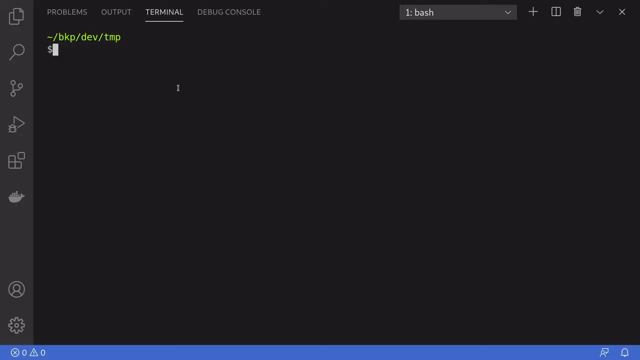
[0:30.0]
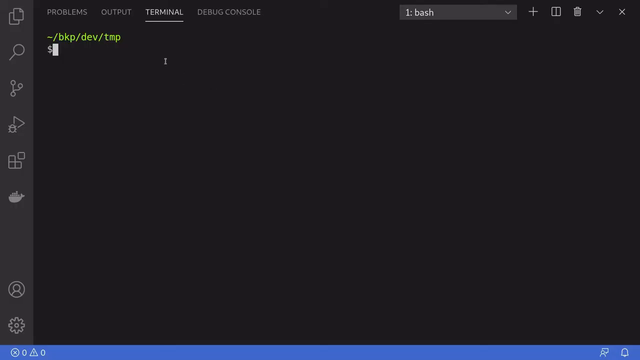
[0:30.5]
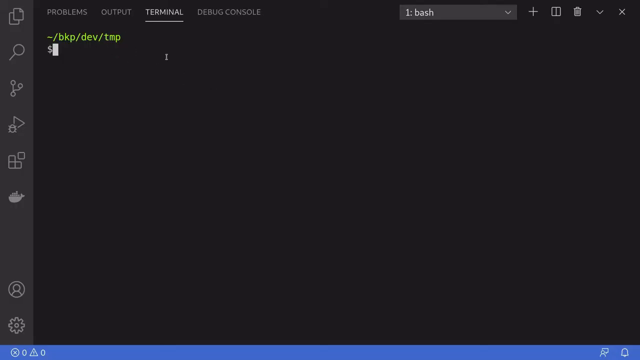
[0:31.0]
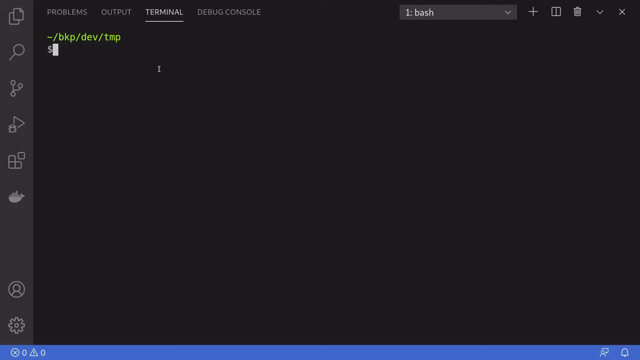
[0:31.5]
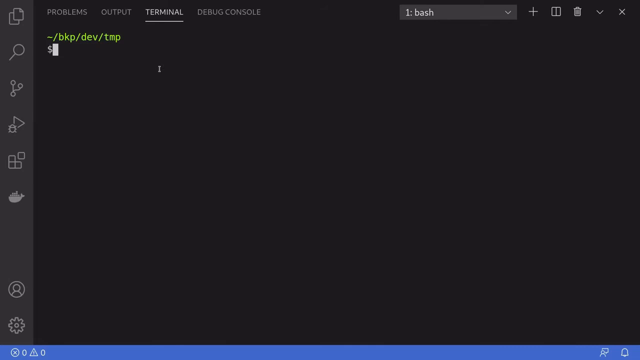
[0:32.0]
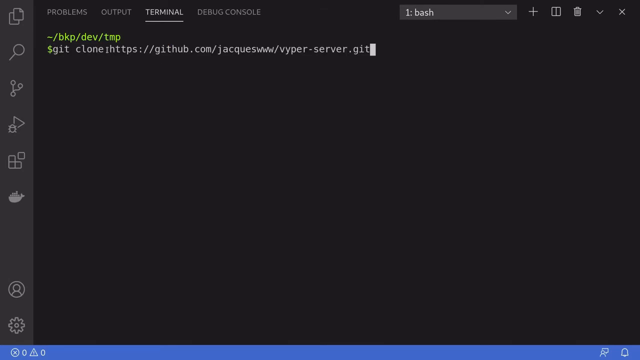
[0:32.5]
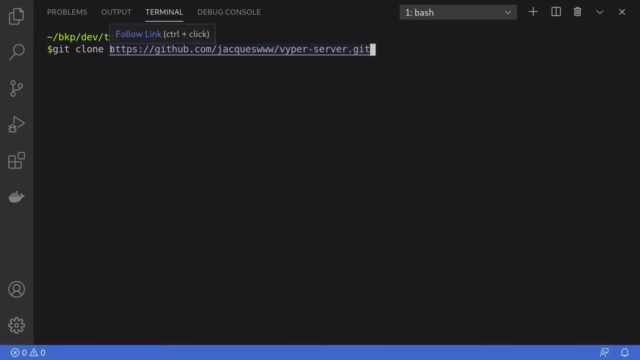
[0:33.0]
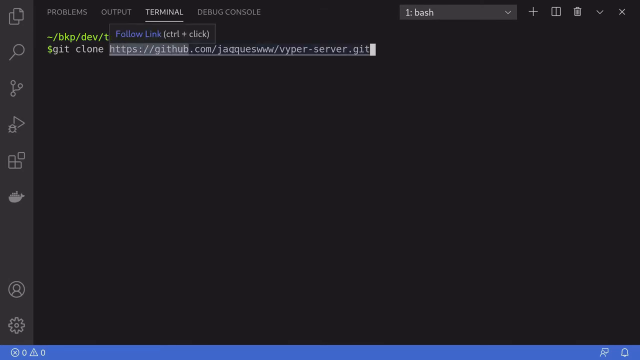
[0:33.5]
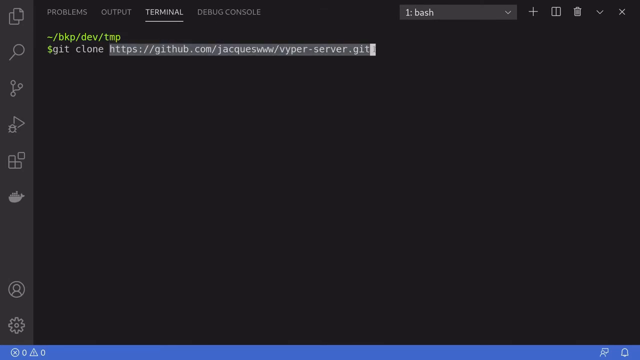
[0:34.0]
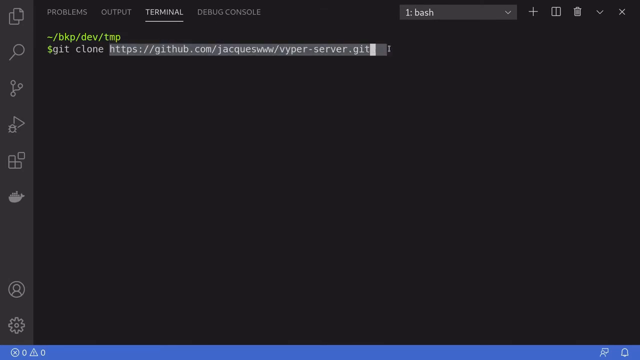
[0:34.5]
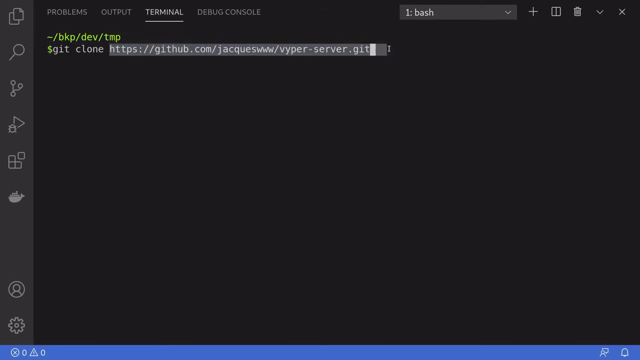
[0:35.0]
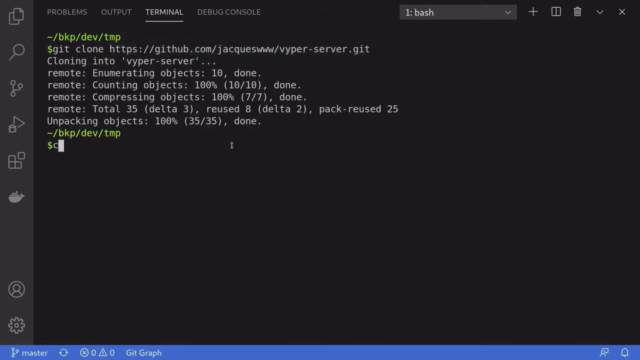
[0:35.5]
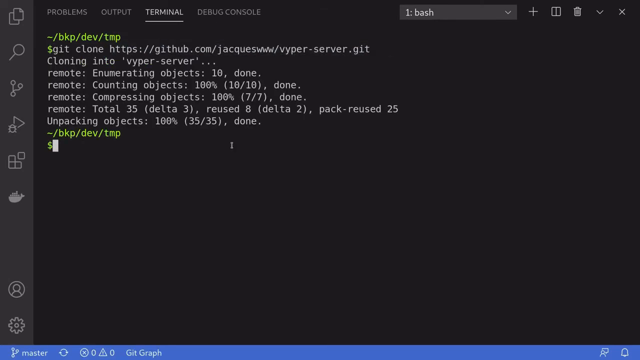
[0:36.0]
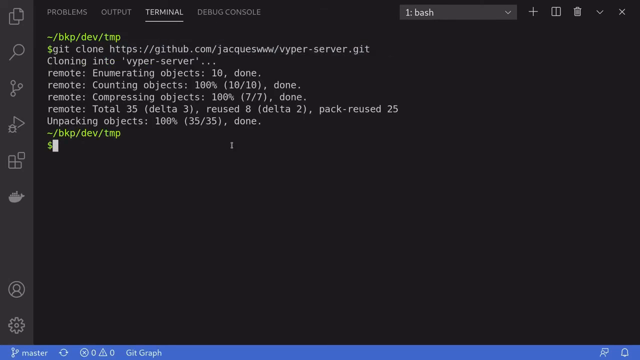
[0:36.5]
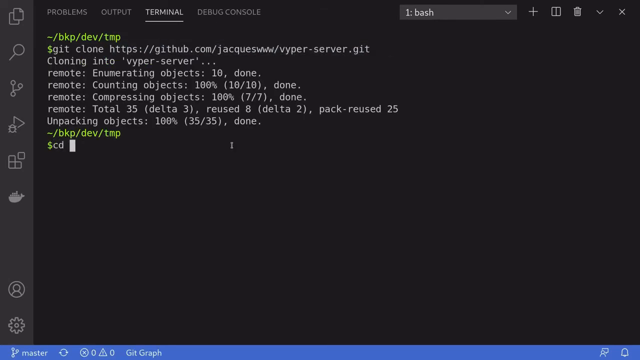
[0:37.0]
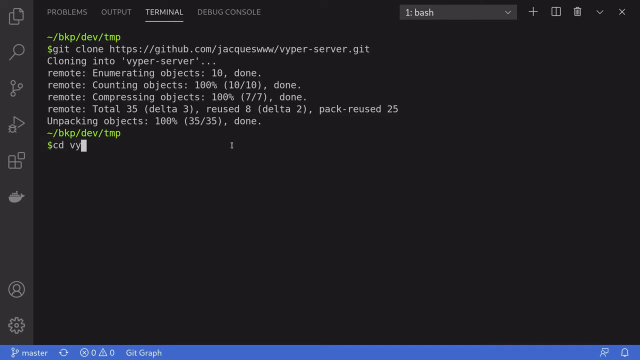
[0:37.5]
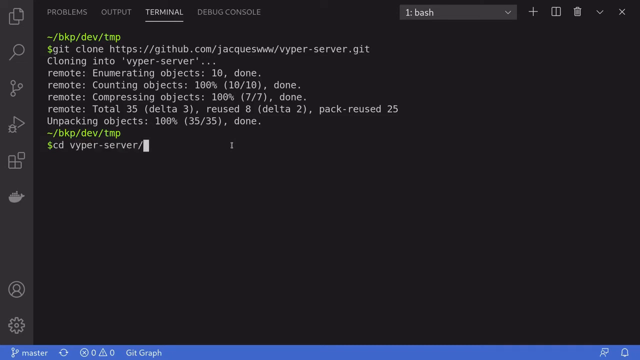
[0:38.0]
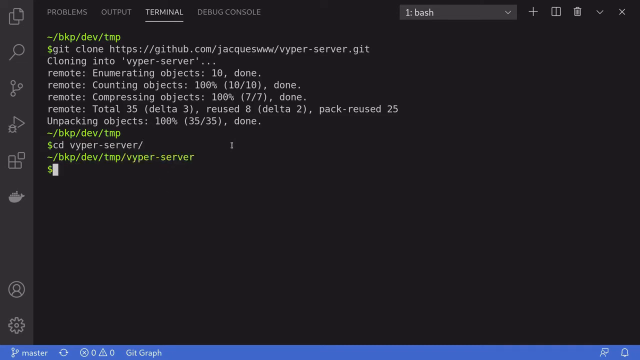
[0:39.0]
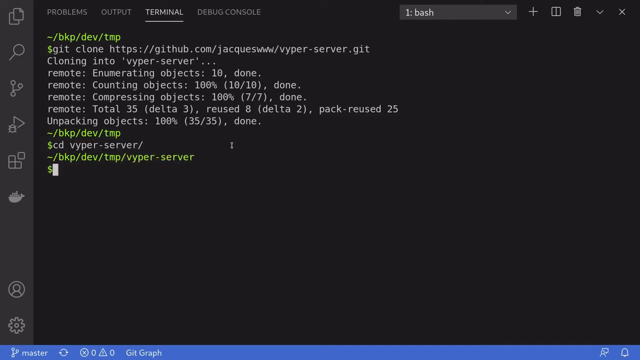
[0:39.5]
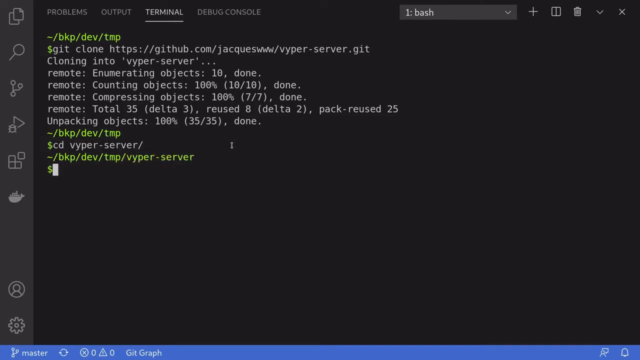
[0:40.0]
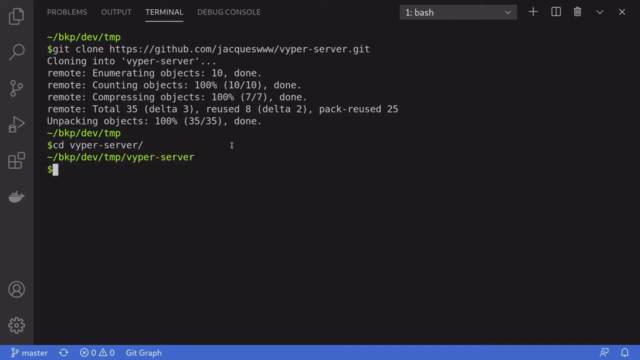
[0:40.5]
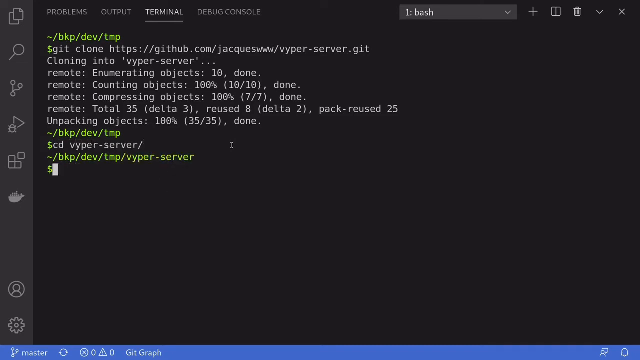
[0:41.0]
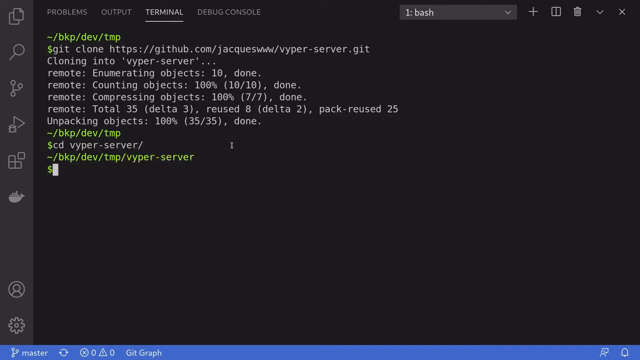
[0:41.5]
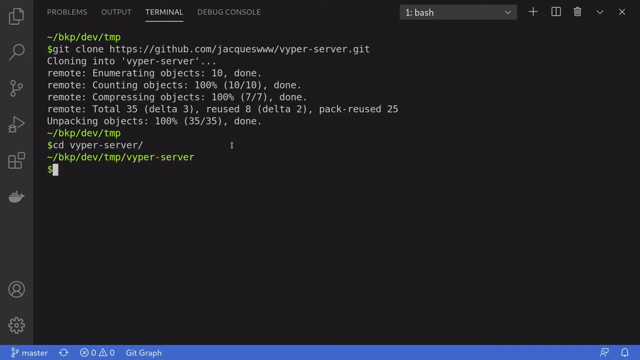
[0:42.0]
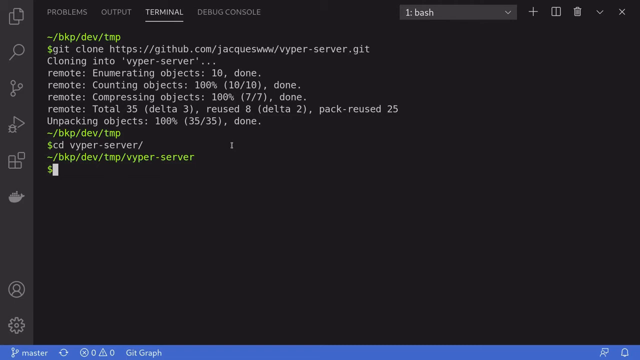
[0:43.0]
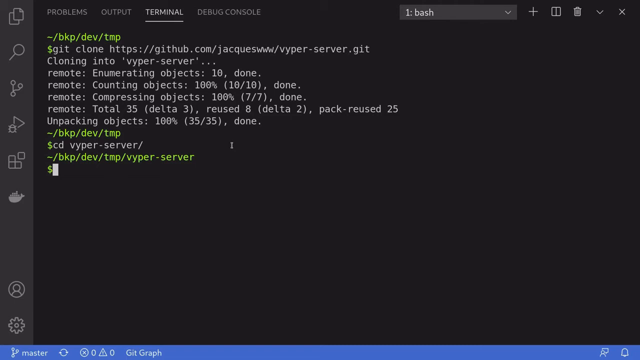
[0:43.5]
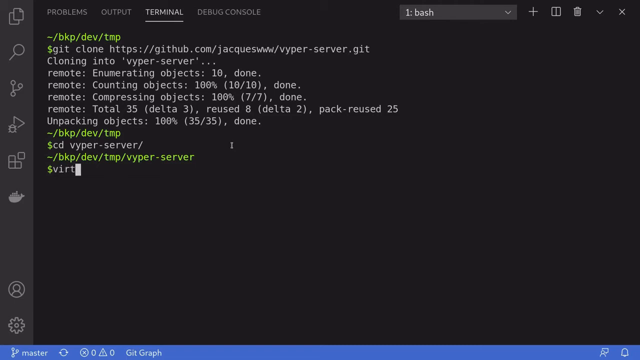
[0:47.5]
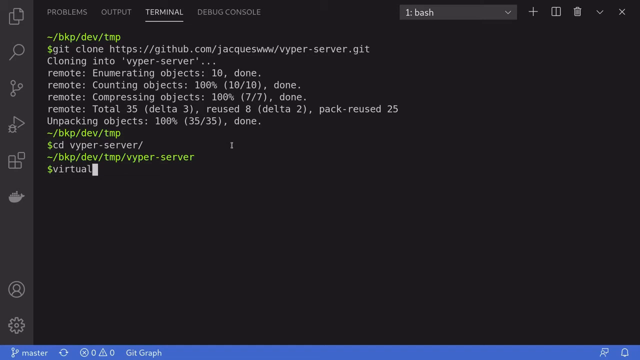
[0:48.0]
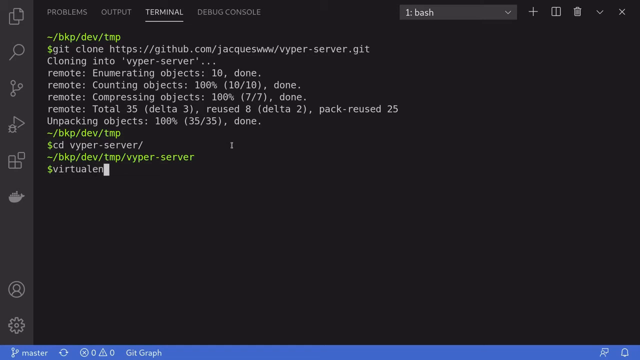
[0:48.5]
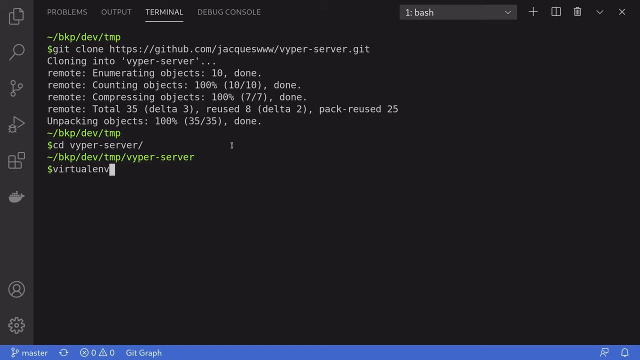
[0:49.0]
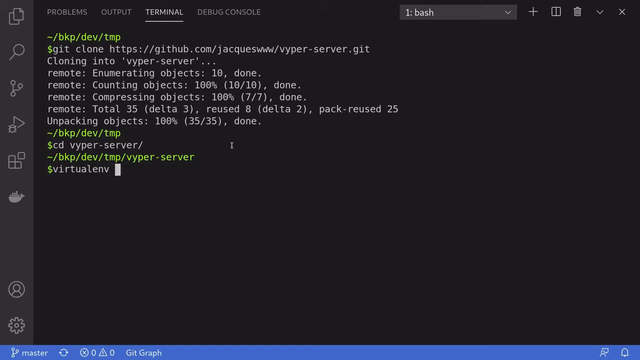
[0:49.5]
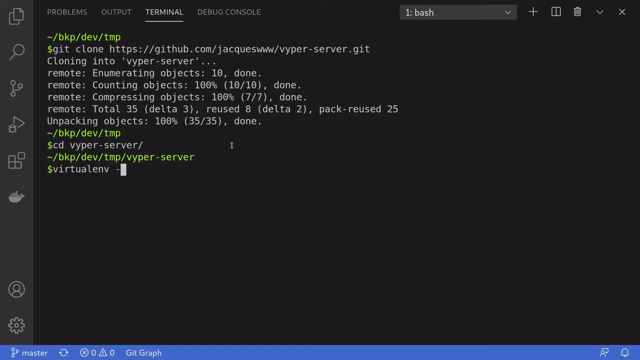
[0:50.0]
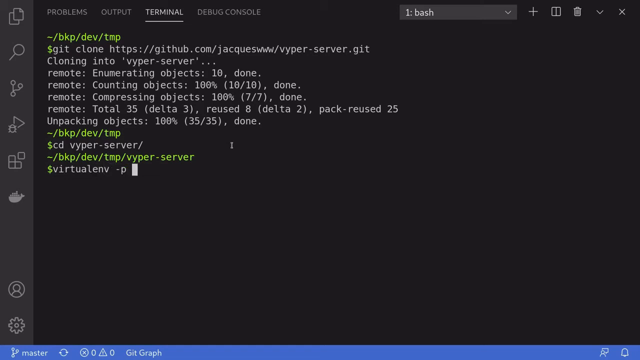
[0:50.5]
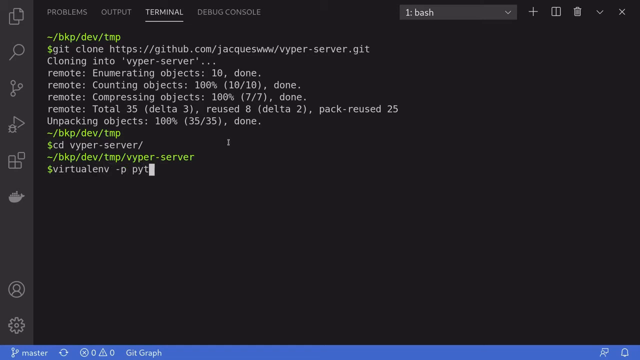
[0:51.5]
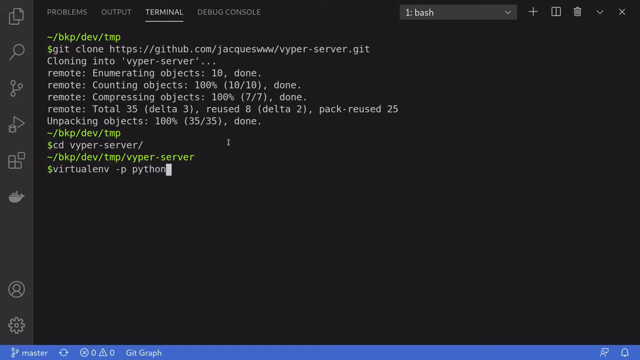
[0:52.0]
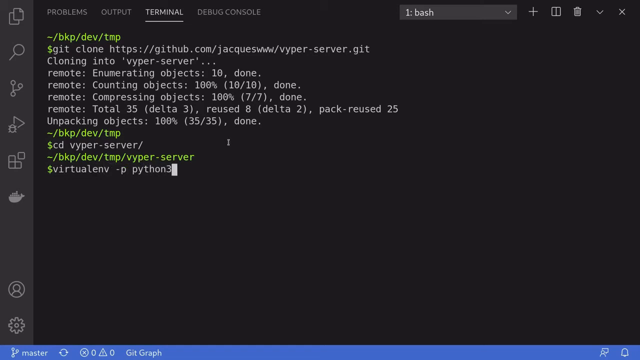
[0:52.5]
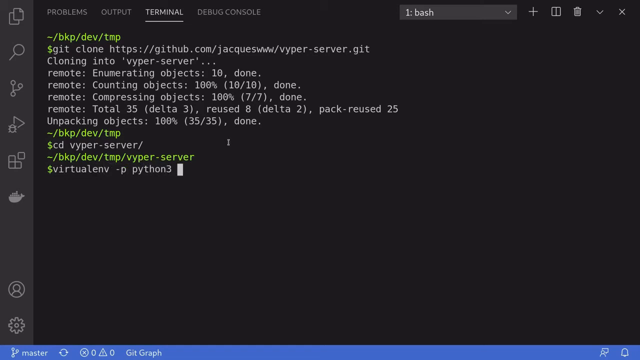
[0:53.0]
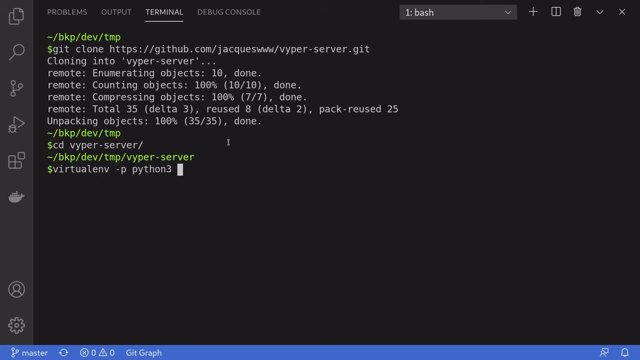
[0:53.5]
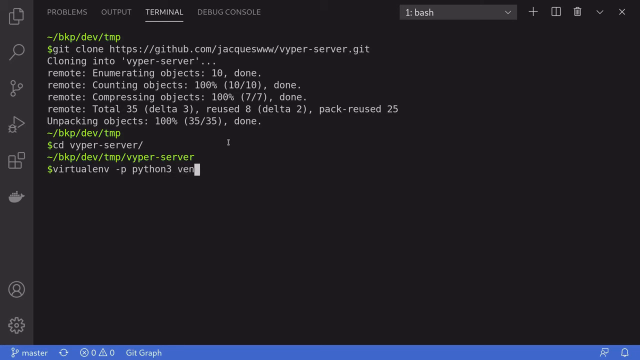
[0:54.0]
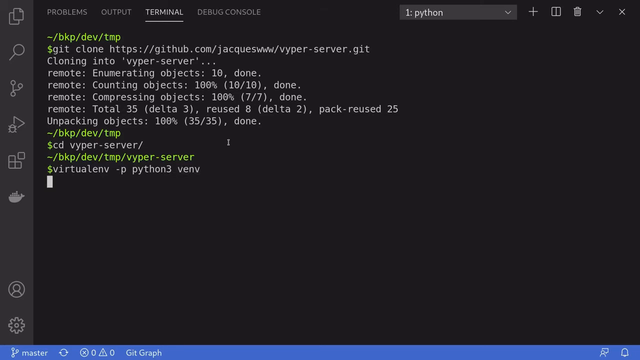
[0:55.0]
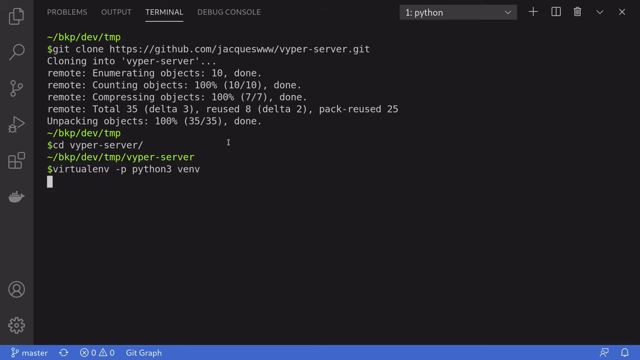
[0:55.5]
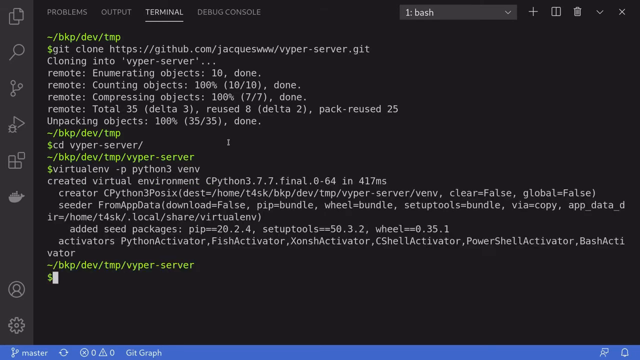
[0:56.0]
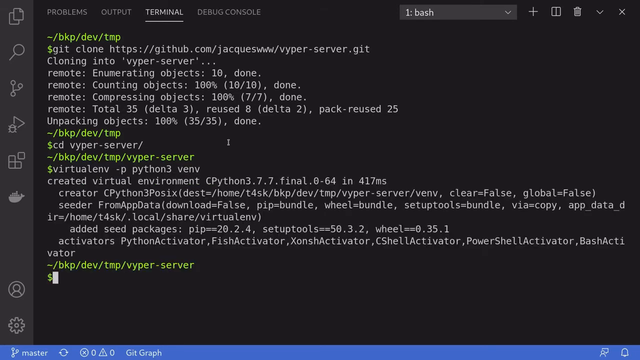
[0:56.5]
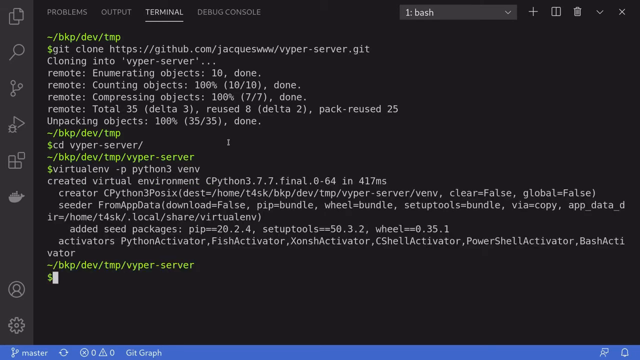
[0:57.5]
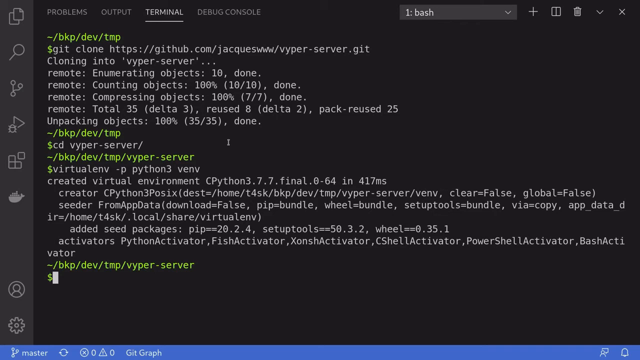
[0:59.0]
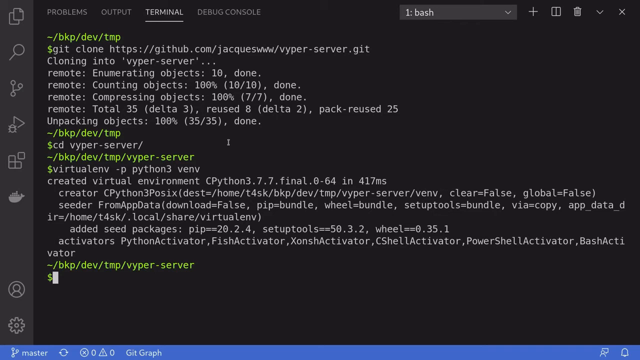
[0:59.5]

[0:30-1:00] The video looks at how to use the two compilers, the remote compiler and the local compiler. The remote compiler is shown as out of order and not working, so the local compiler is used instead. The steps are to copy the link or URL, which gives codes, and then to get a Python package by searching "virtualenv-p-python3", since the package is needed for the local compiler.